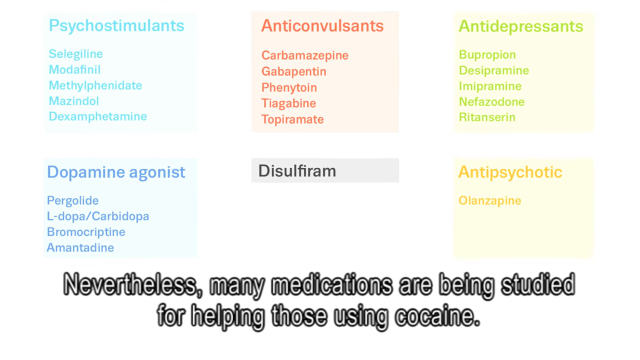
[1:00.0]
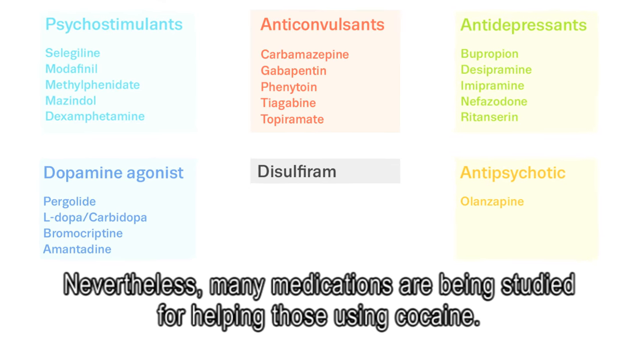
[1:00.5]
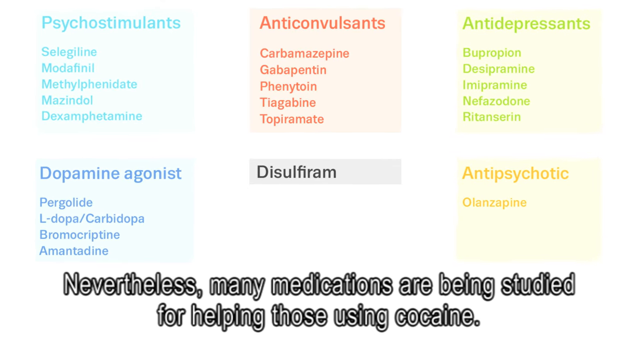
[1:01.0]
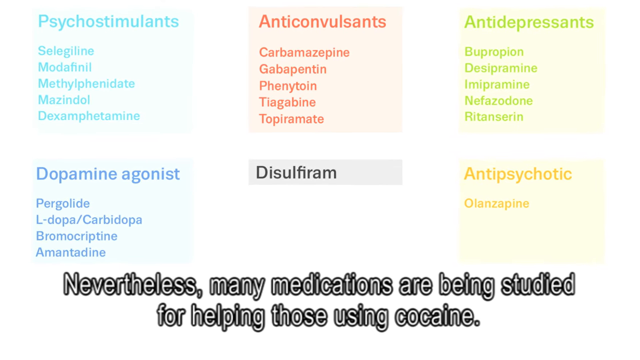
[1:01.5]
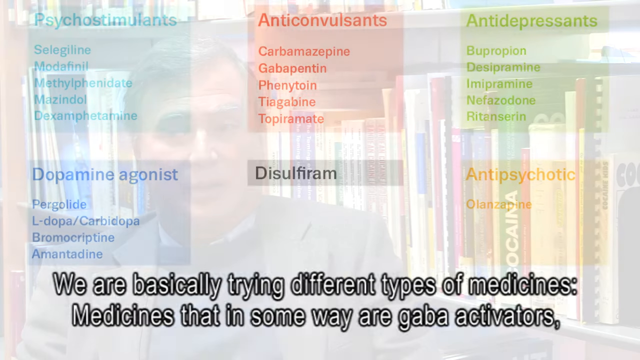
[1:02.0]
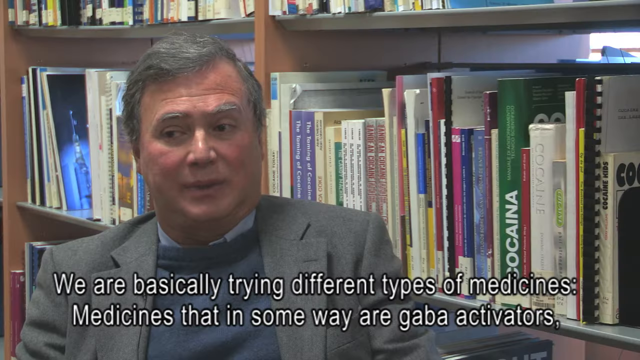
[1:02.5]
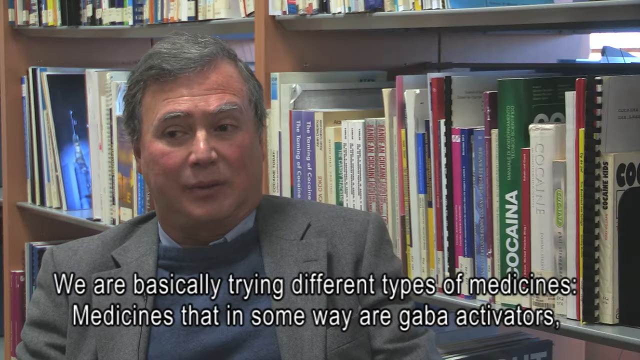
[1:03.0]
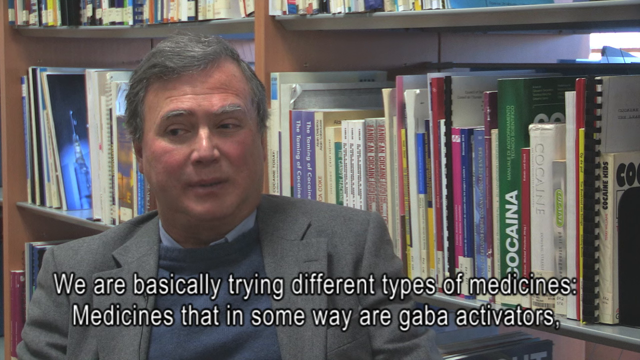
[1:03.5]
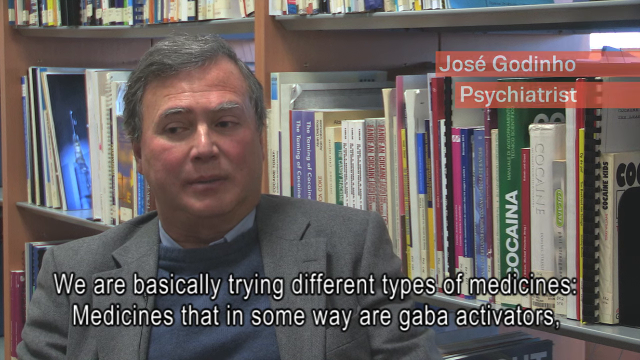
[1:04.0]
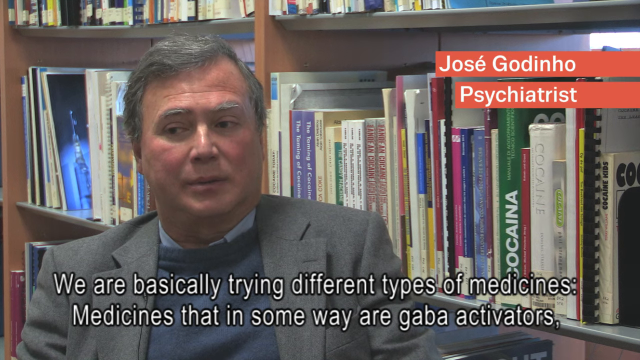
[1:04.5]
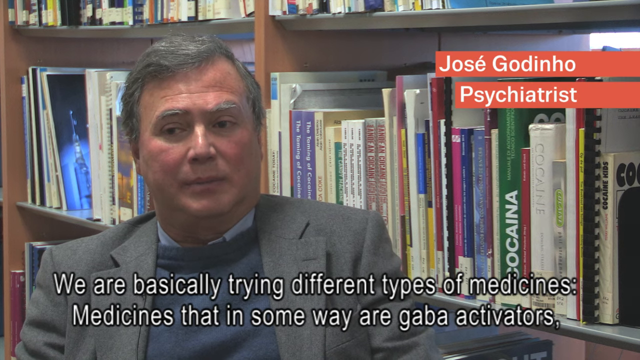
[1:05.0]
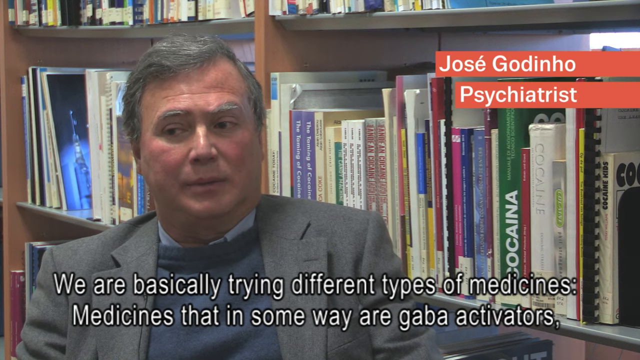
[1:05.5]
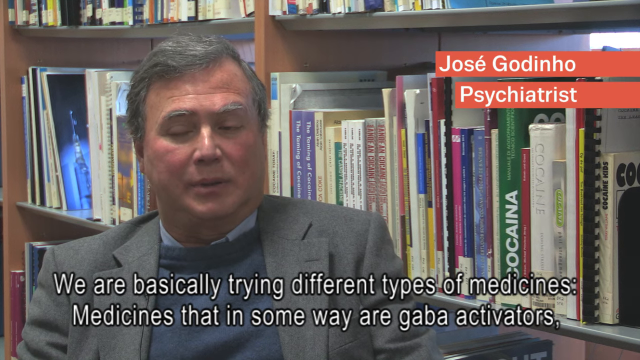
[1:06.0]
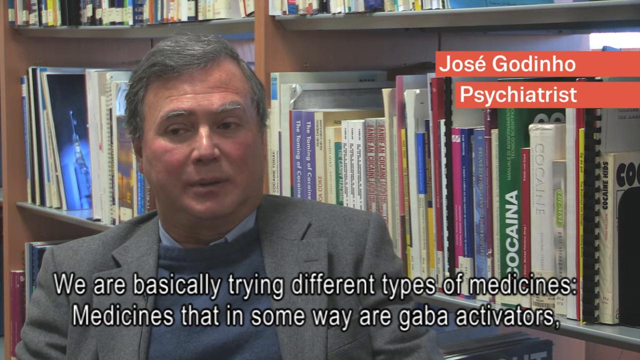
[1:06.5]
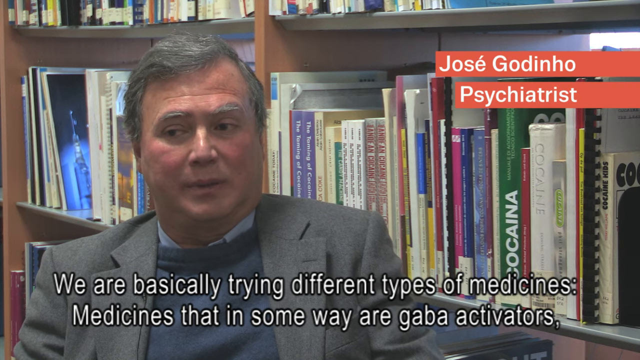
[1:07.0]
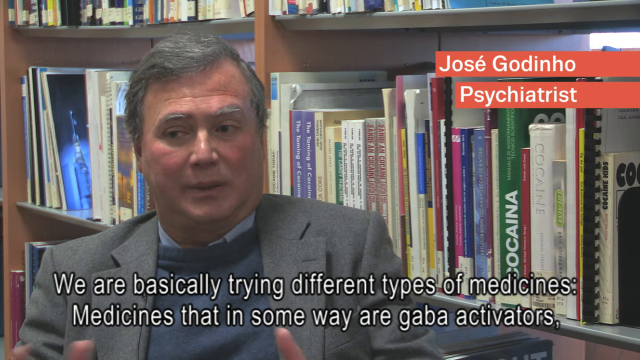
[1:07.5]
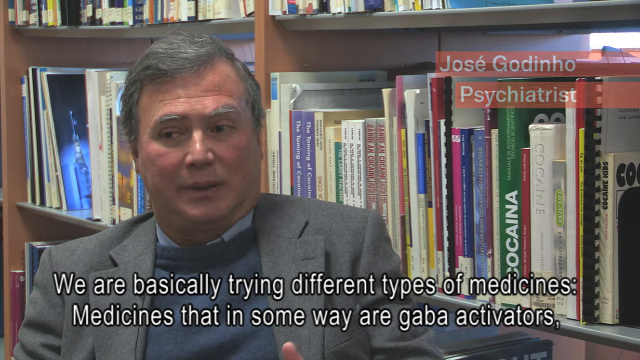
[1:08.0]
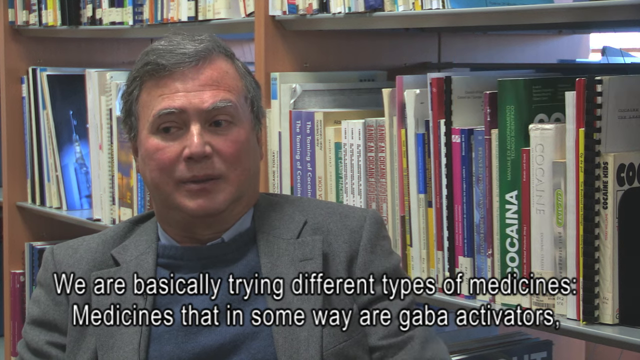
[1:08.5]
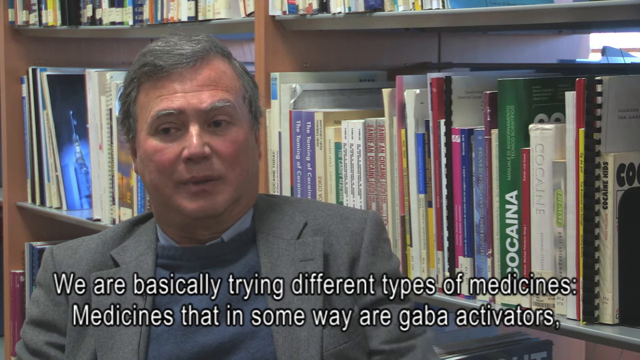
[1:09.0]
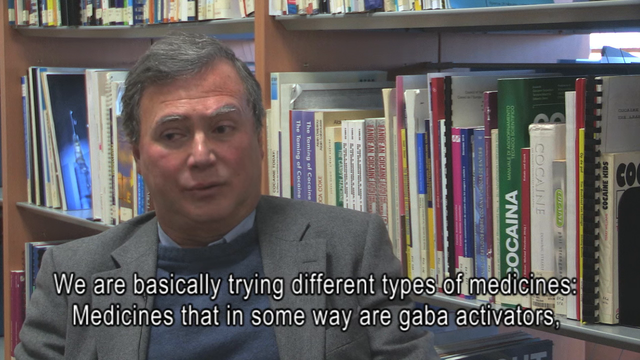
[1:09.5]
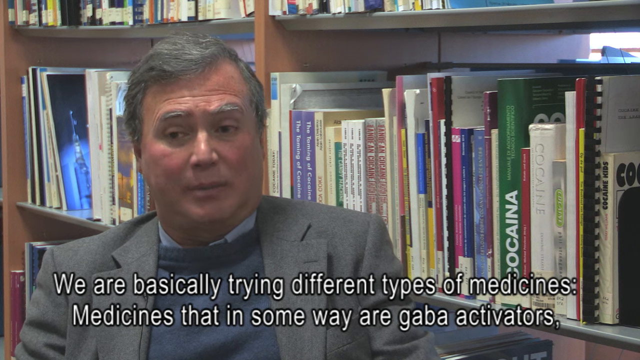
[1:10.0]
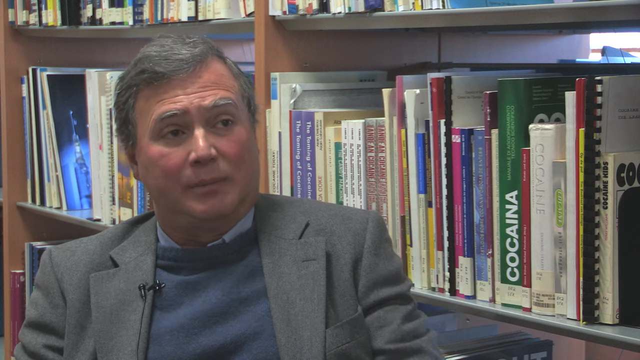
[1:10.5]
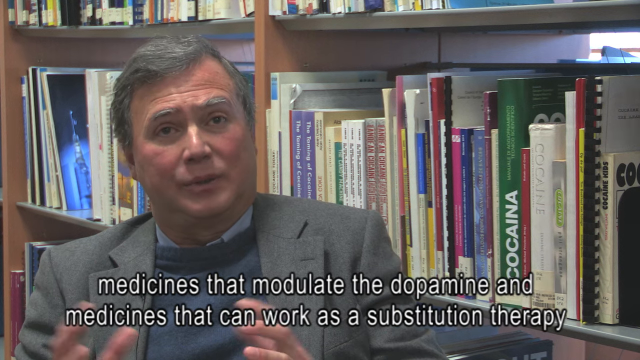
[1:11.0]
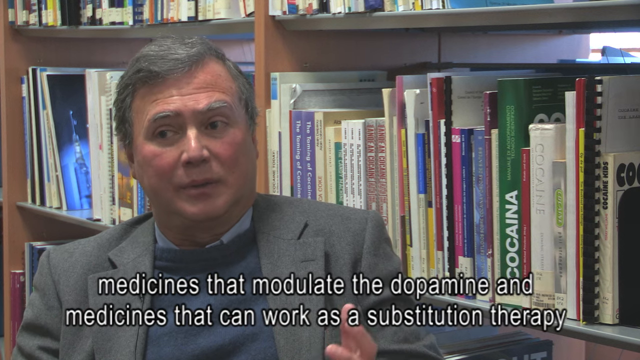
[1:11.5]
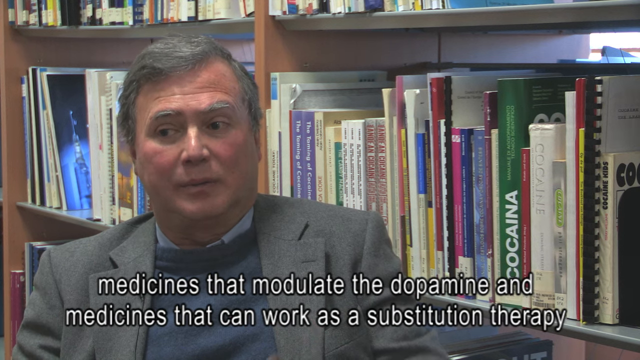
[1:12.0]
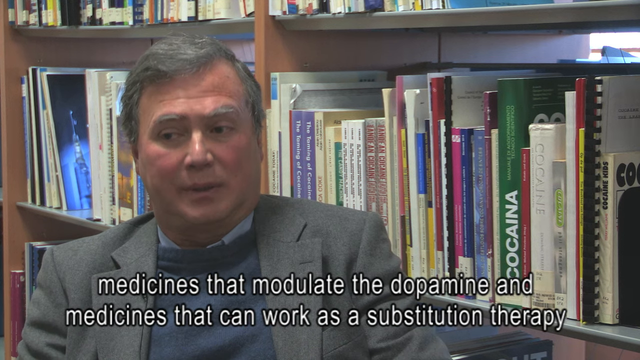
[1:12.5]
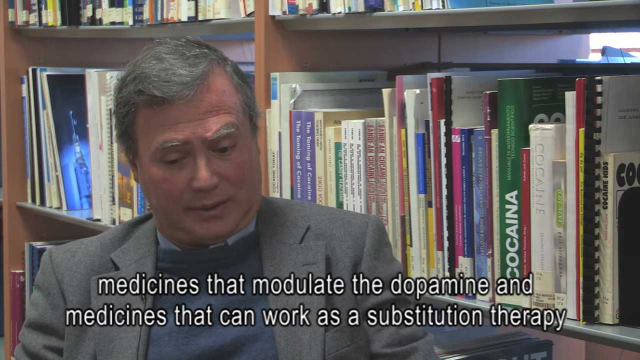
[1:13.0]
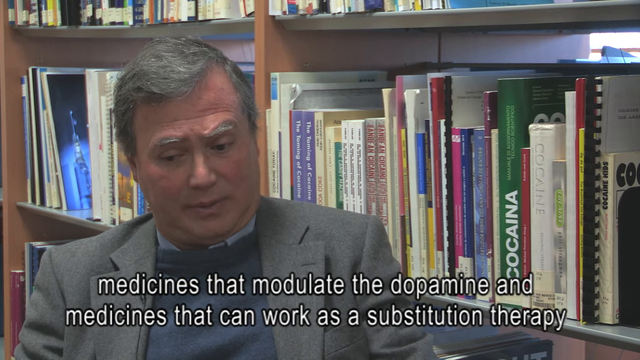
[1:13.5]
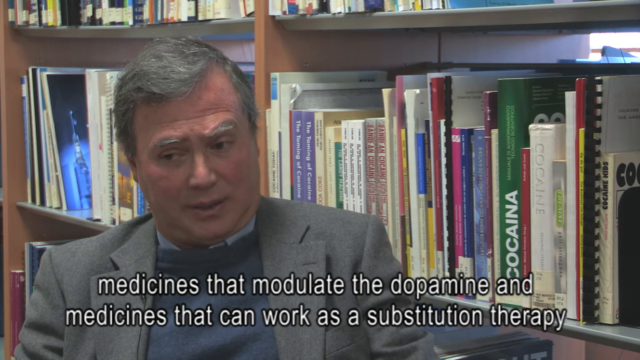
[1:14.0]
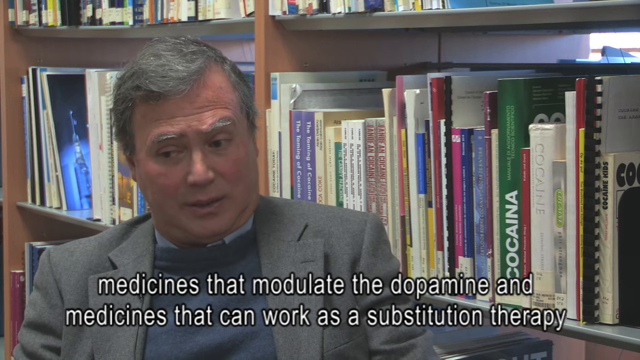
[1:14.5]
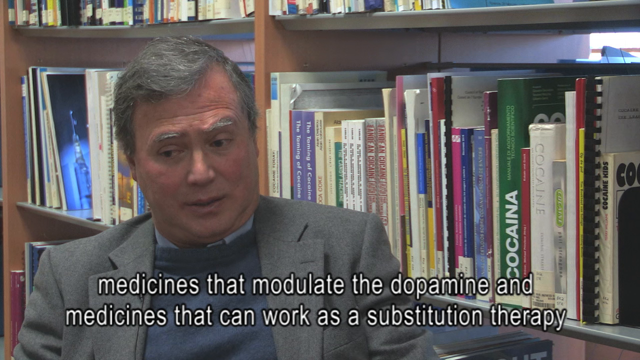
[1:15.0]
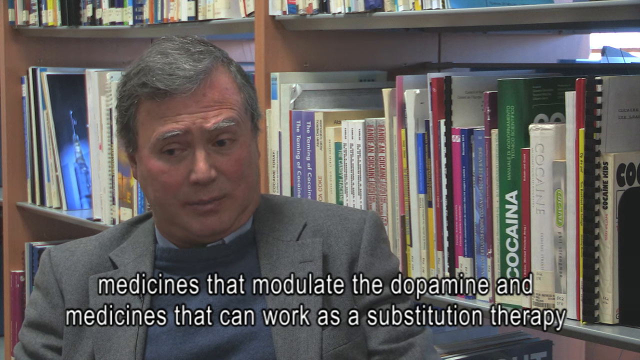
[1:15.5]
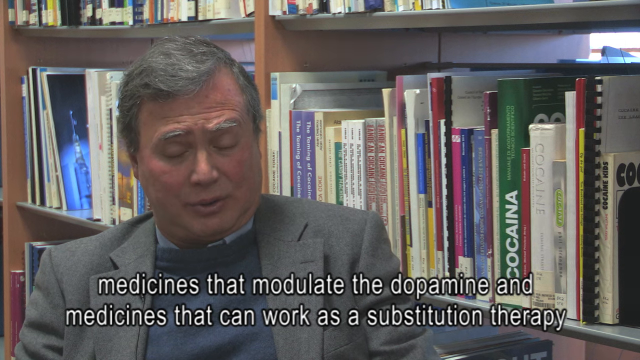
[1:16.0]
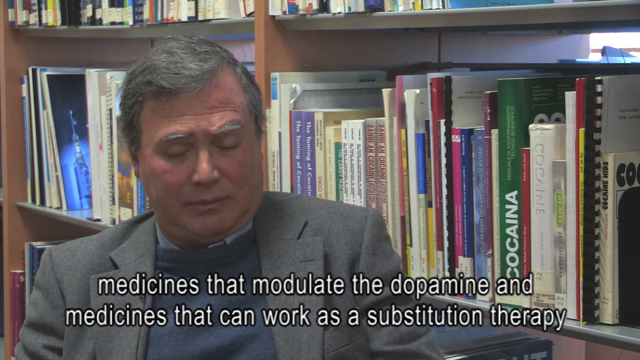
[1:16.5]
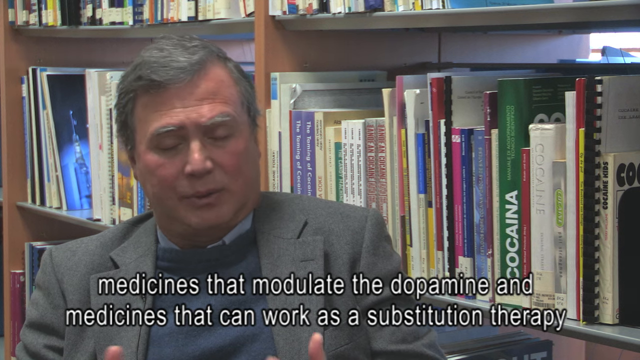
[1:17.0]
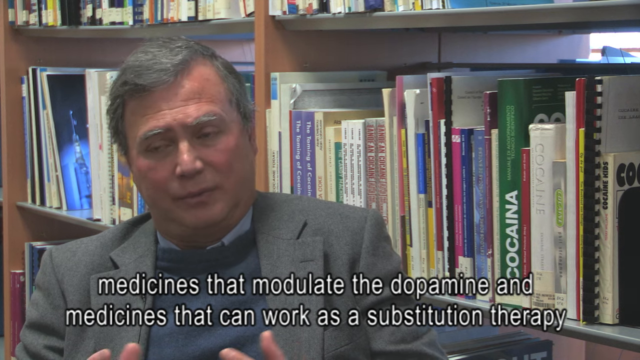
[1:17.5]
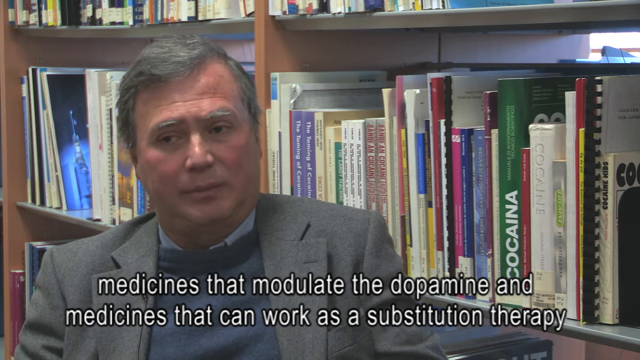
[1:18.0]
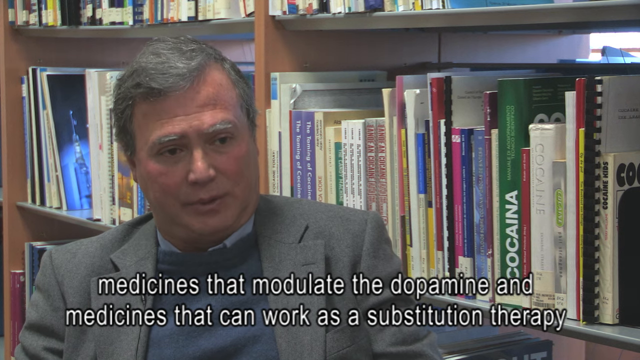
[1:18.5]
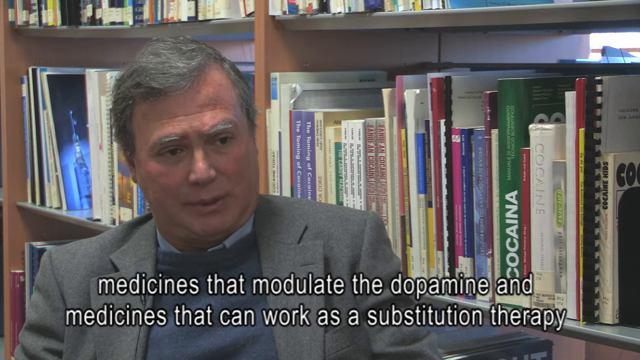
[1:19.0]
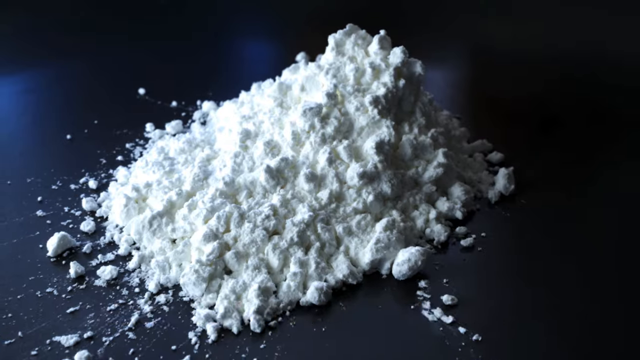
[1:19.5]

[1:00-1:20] A man is sitting in a chair, with an on-screen label identifying him by name as a "psychiatrist", and appears to be talking. He is an older, gray-haired, kind of heavy man with short, business-like hair, wearing a gray sport jacket over a sweater and a collared shirt. Drug names appear on the screen: "anticonvulsants, antidepressants, antipsychotics, dopamine agonist, psychostimulants". Before this, a picture showed these names of drugs. Right behind him is a bookcase with a lot of books, probably his own personal library, maybe in his office.